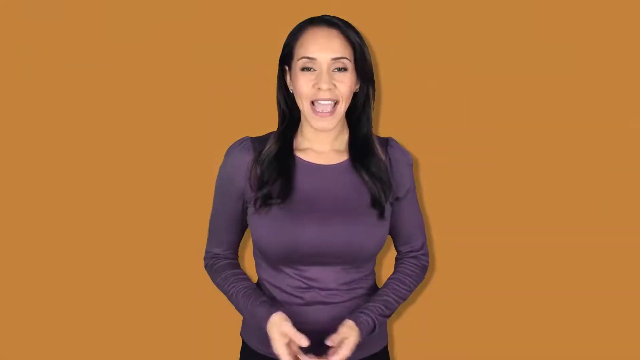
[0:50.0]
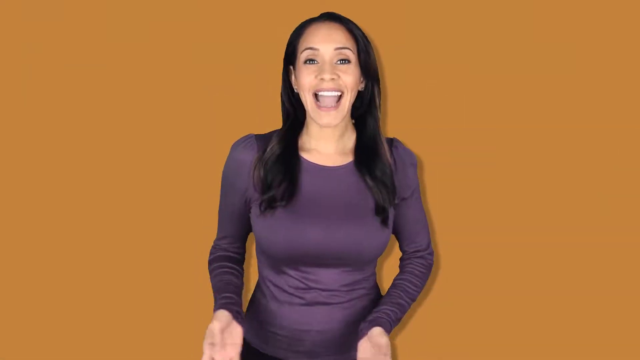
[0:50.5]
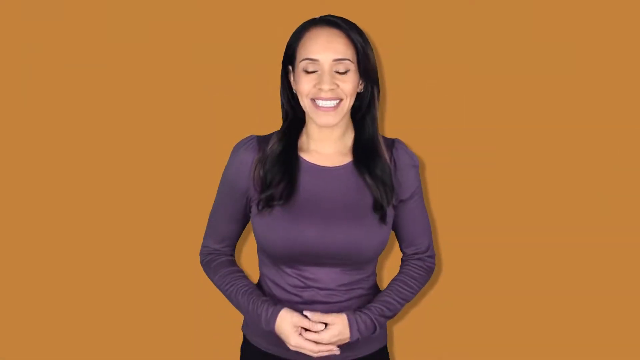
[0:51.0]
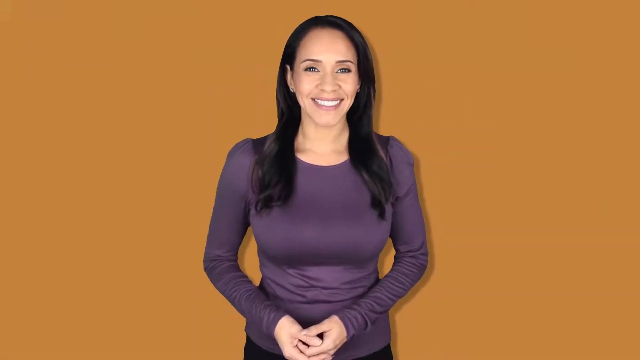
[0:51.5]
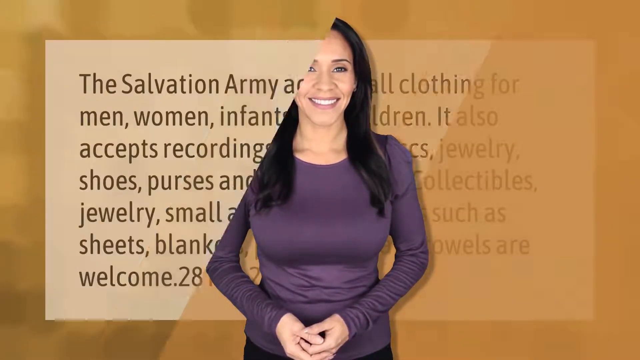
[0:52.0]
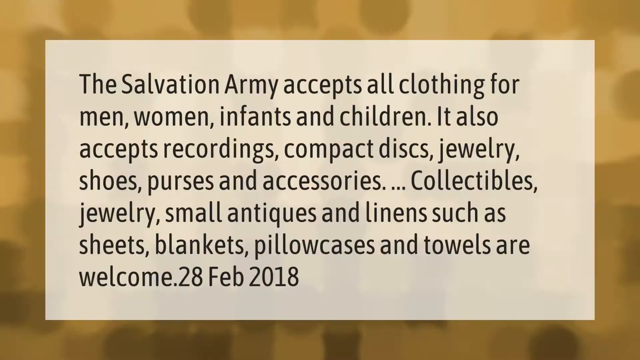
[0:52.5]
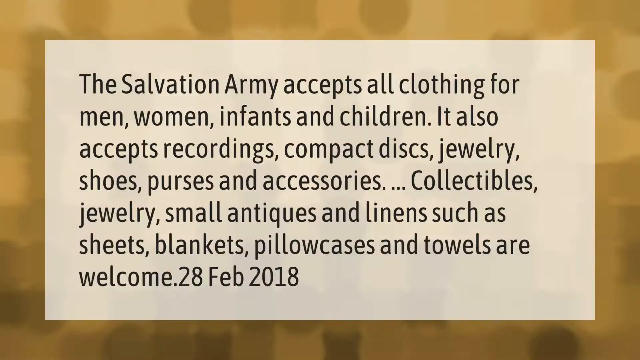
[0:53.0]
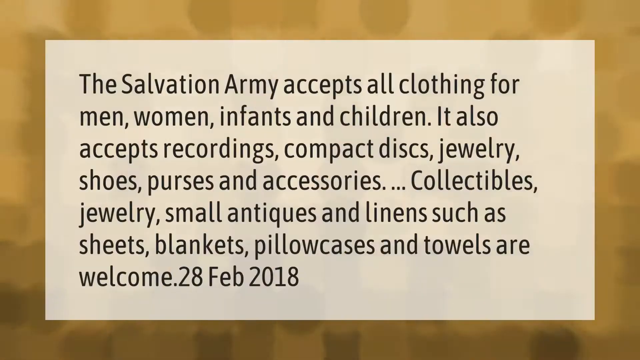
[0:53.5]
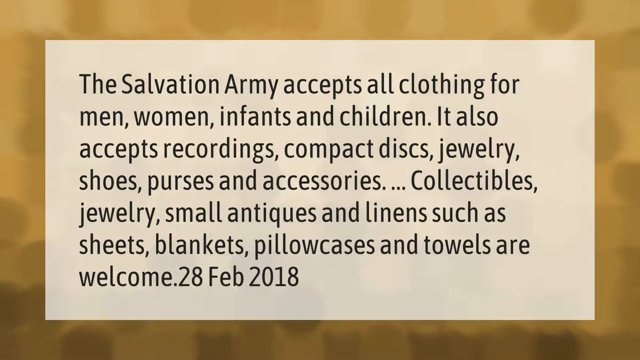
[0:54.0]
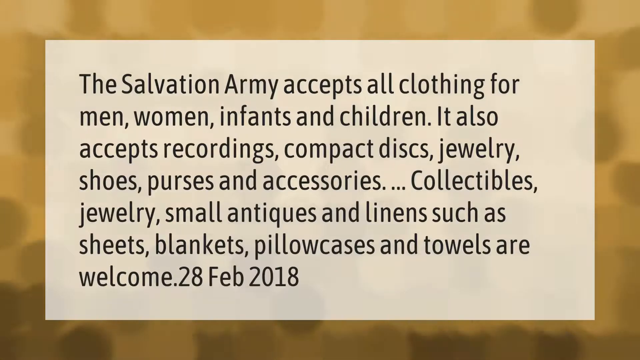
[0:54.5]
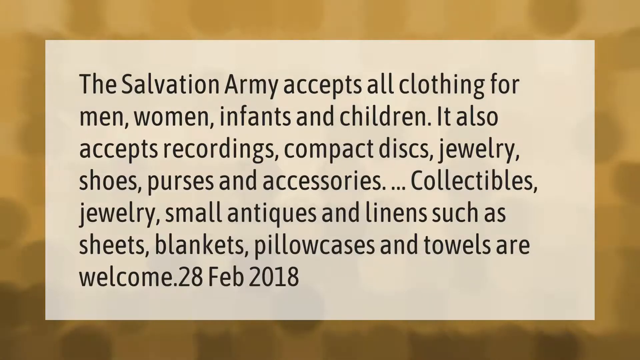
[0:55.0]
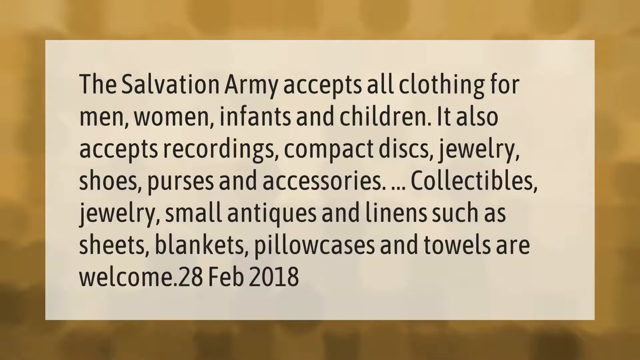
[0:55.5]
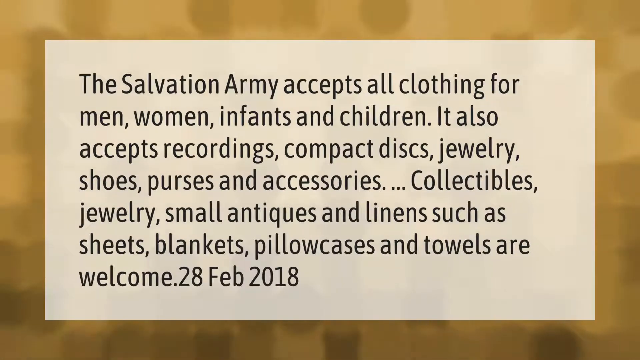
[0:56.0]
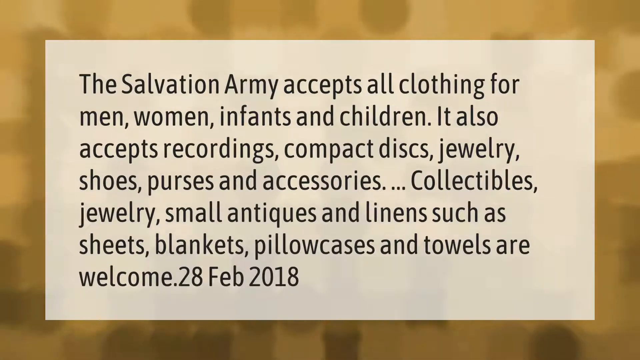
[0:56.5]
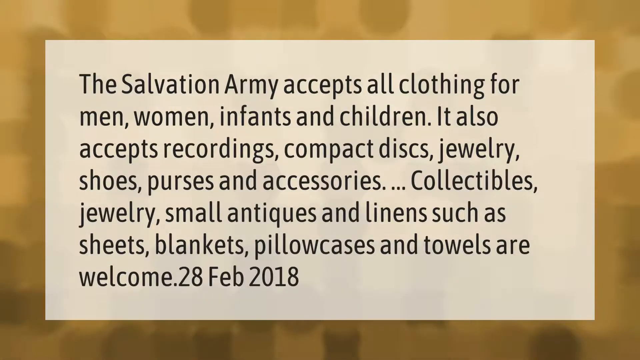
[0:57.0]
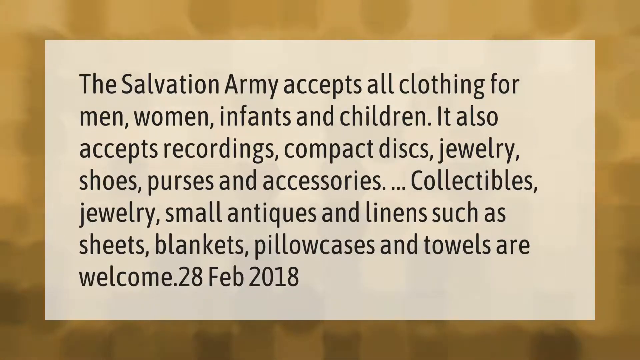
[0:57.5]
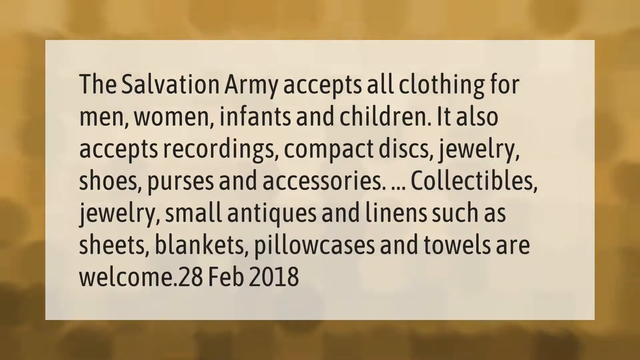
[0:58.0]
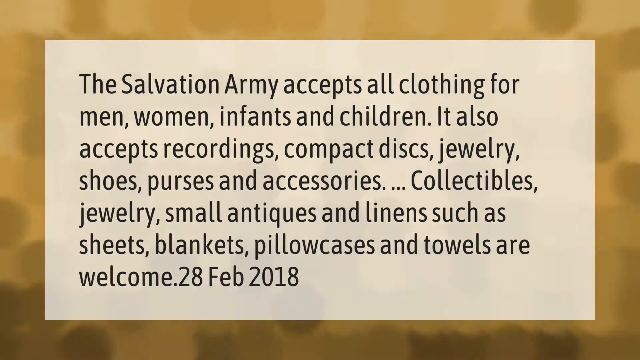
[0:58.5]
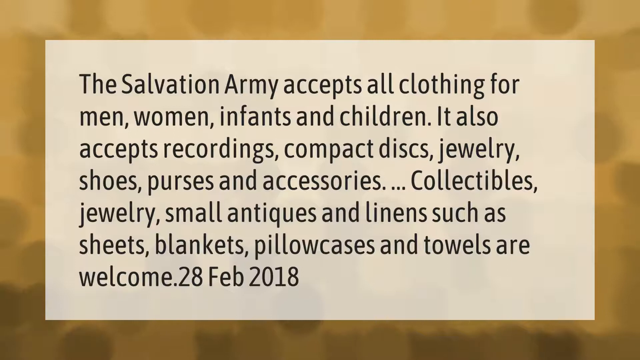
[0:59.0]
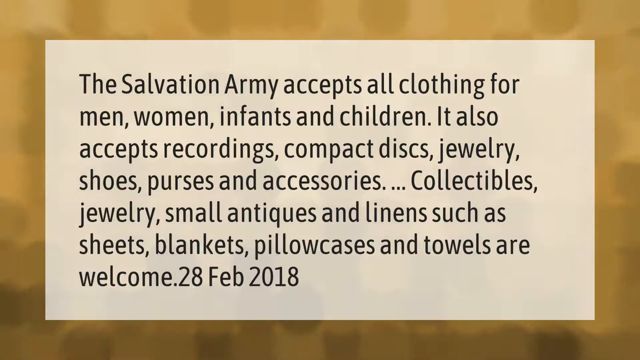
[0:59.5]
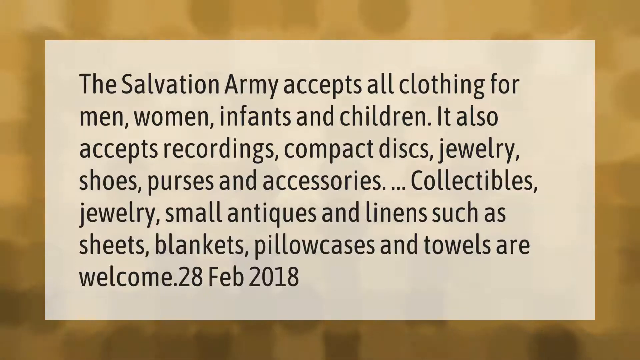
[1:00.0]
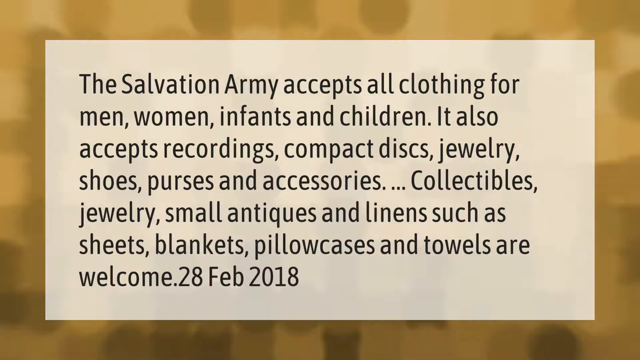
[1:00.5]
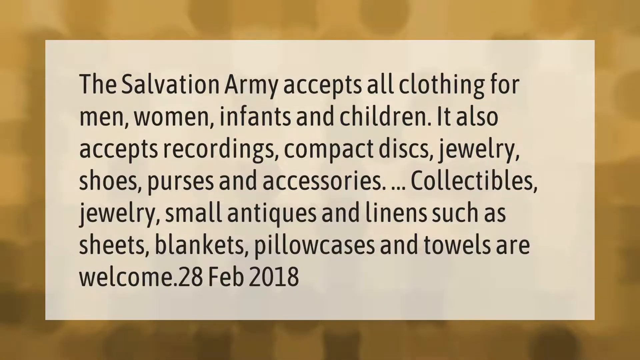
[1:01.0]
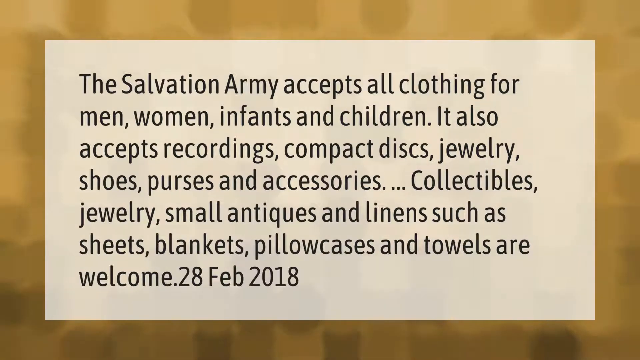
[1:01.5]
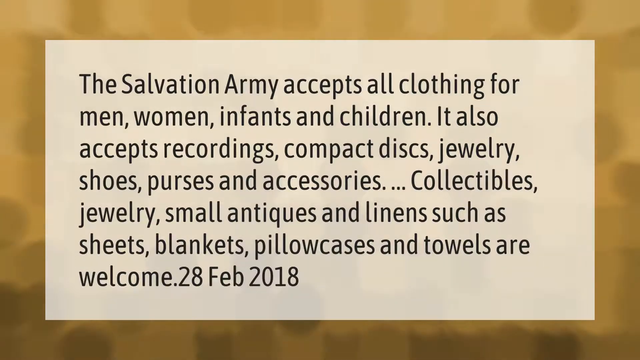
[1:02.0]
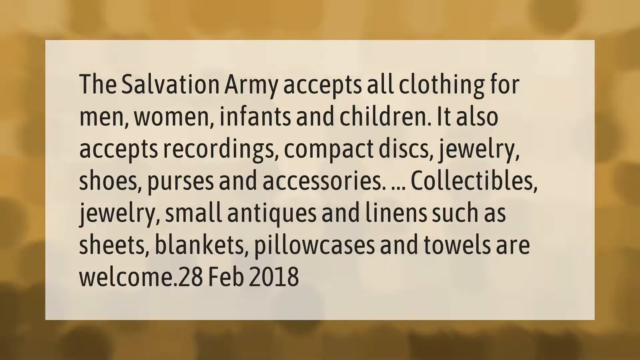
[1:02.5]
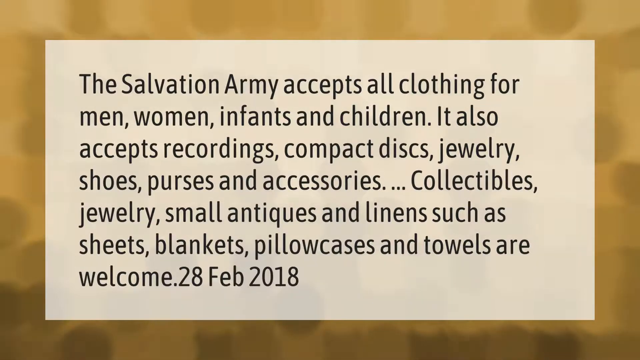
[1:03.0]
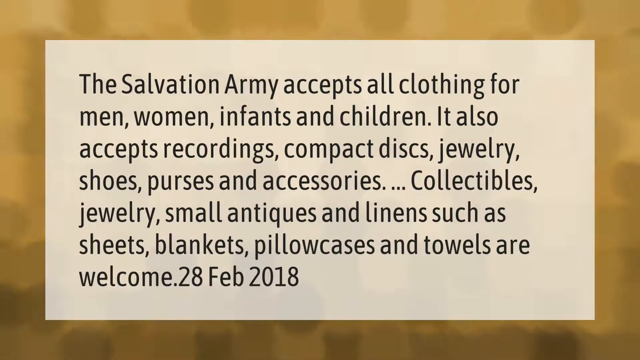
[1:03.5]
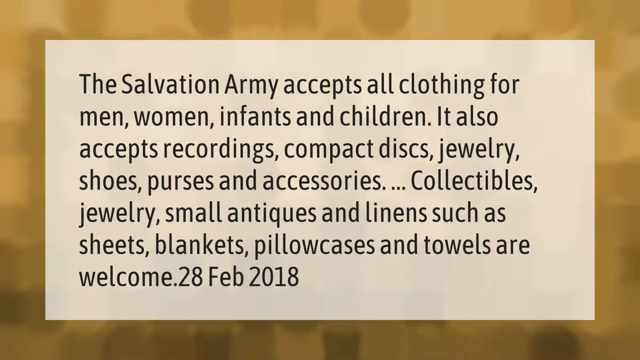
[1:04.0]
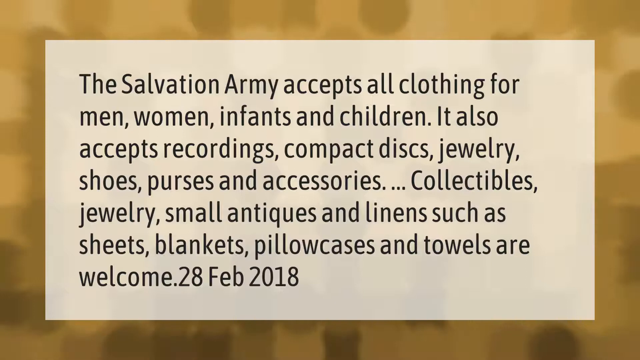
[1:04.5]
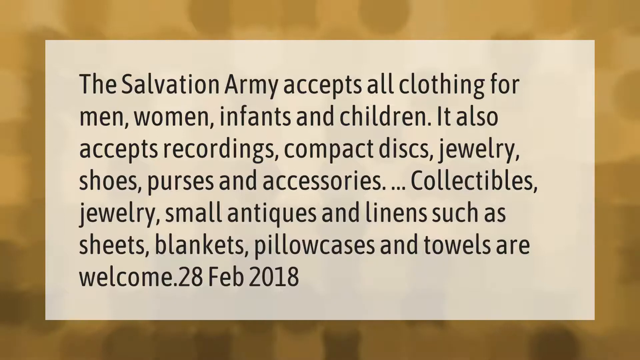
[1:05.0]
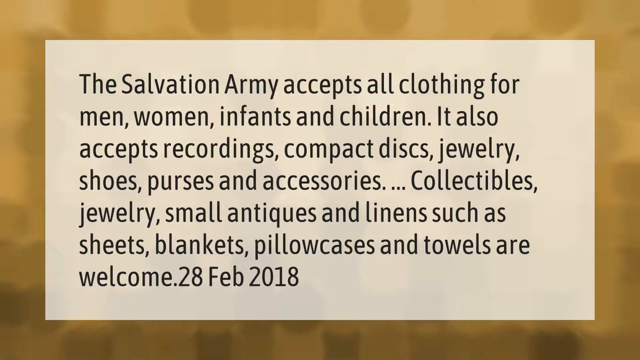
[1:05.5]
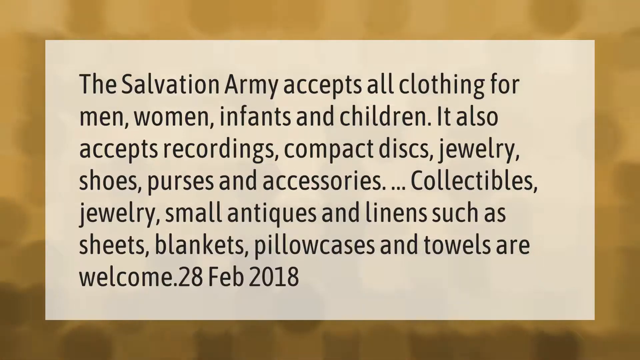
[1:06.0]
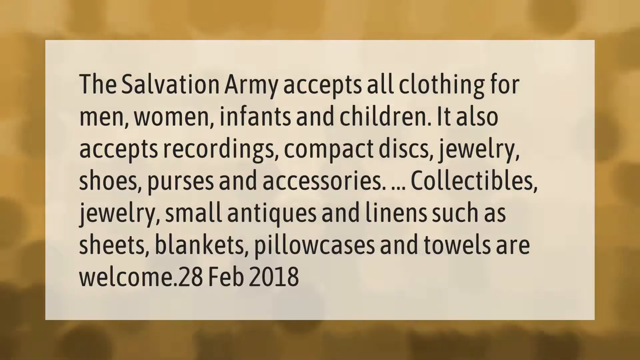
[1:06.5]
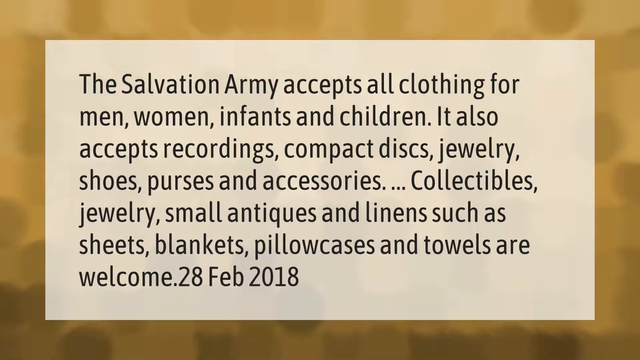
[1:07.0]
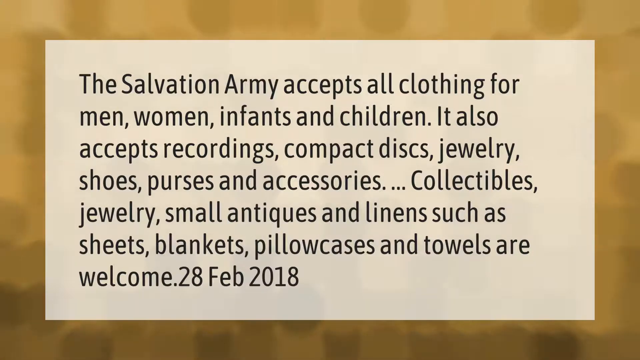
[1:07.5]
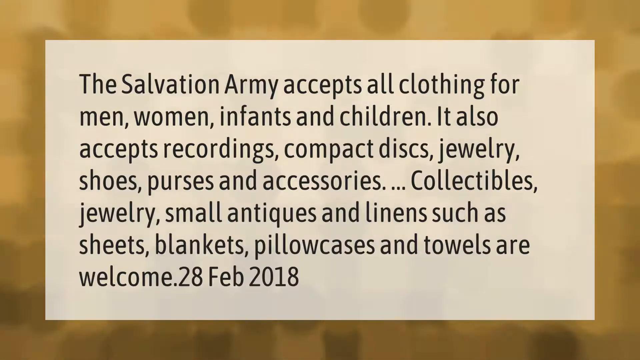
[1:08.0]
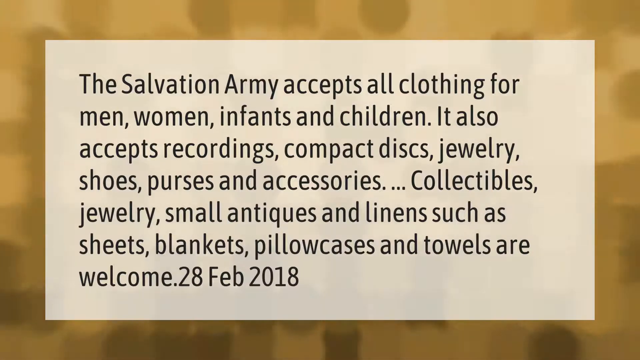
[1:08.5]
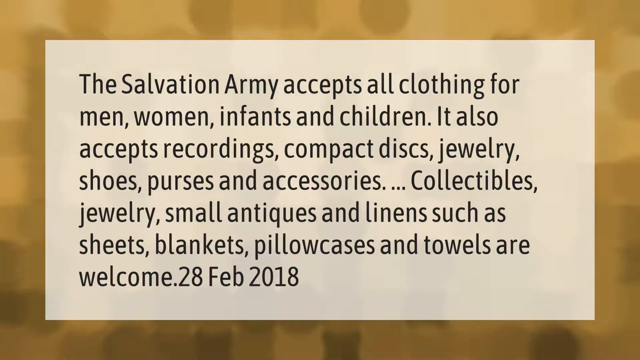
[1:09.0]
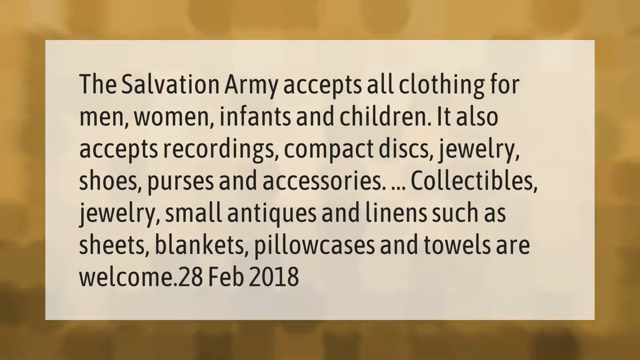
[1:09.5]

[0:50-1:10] Black text on the brown background reads "Army accepts all clothing for men, women, infants, and children. It also accepts recordings, compact discs, jewelry, shoes, purses, and accessories. Collectible jewelry, small antiques, and linens such as sheets, blanket, pillowcase, and towels are welcome." The date February 28, 2018 is shown. There is no woman in this part; it is only words.